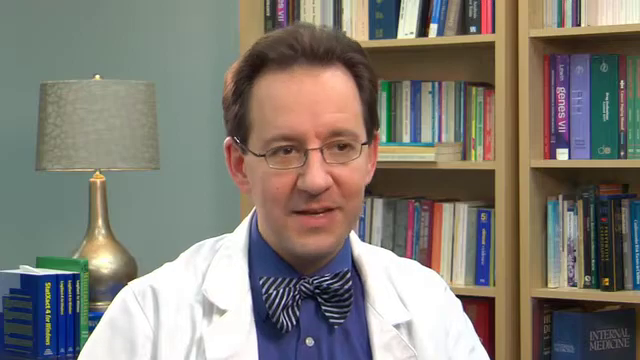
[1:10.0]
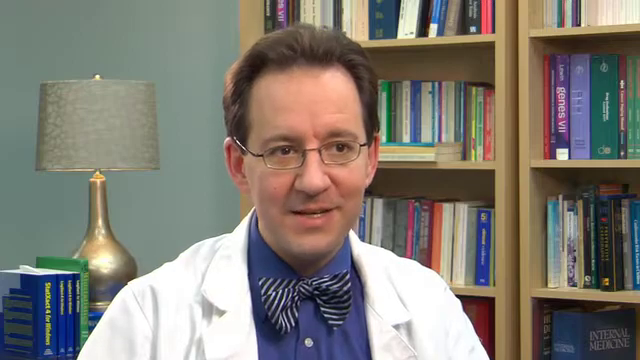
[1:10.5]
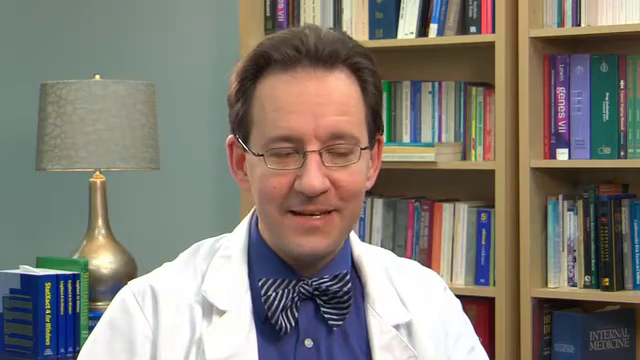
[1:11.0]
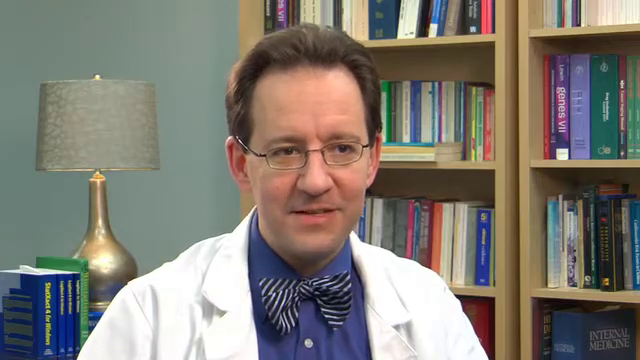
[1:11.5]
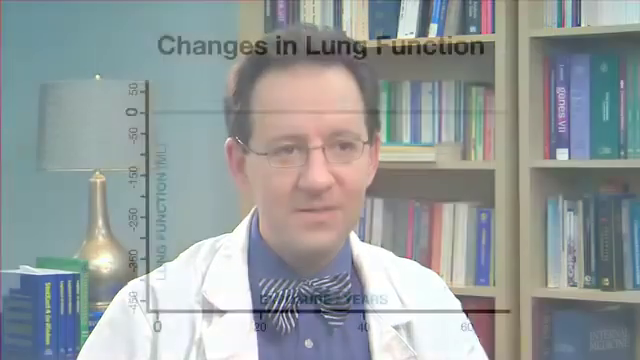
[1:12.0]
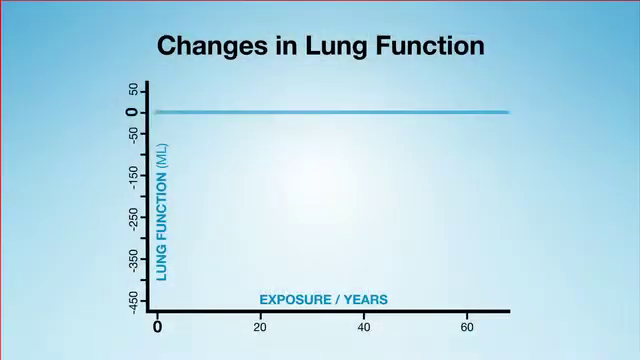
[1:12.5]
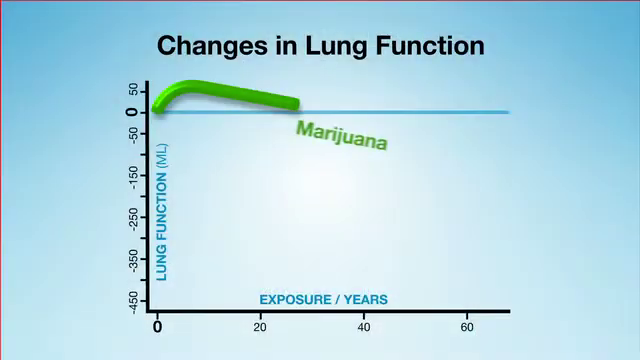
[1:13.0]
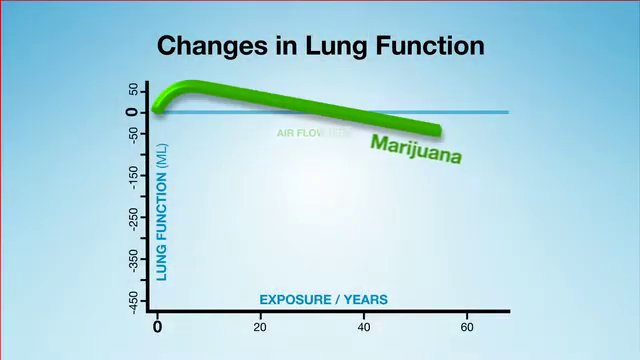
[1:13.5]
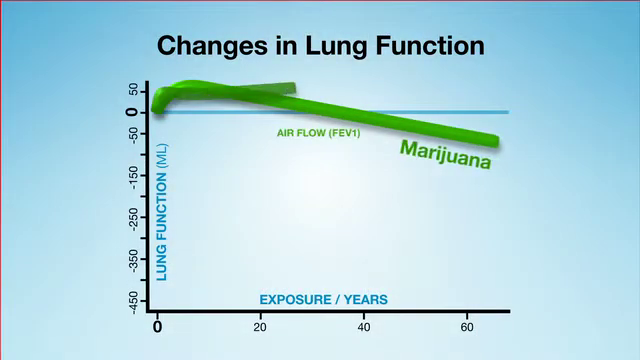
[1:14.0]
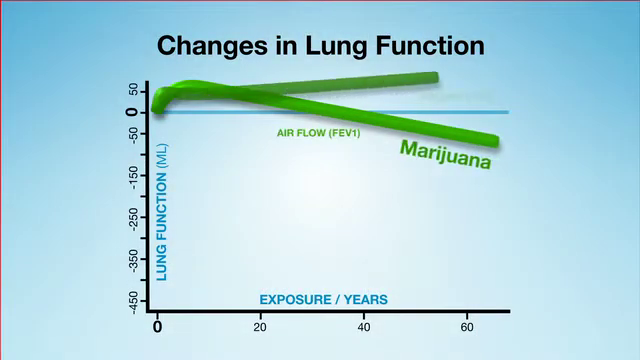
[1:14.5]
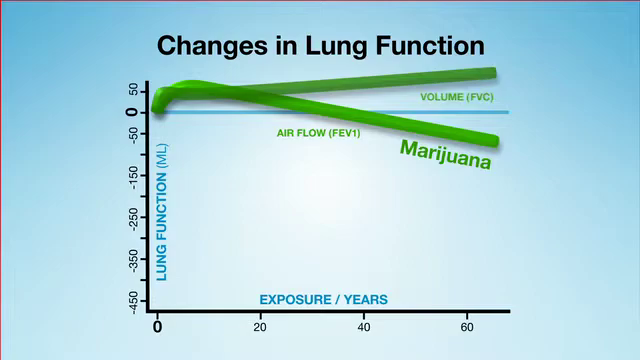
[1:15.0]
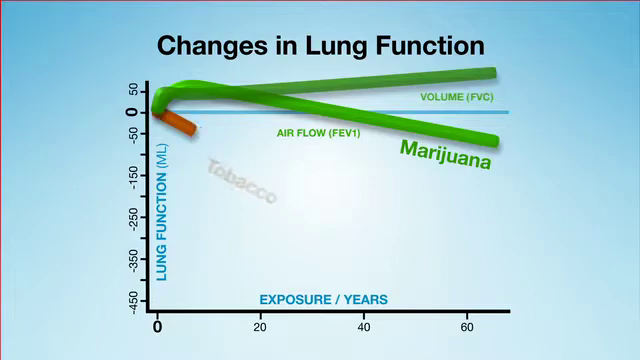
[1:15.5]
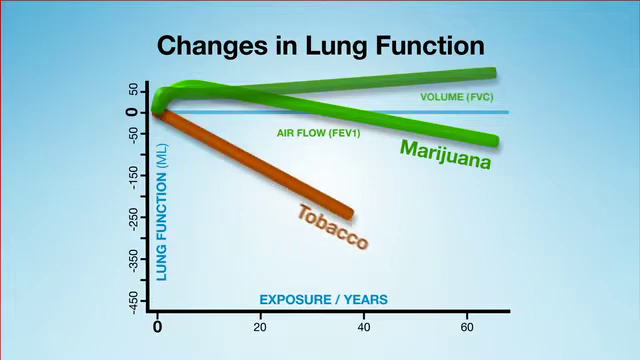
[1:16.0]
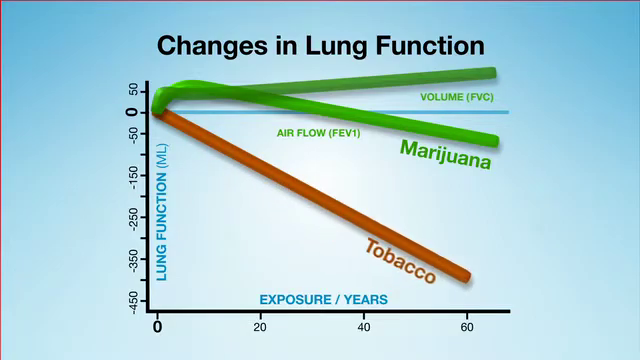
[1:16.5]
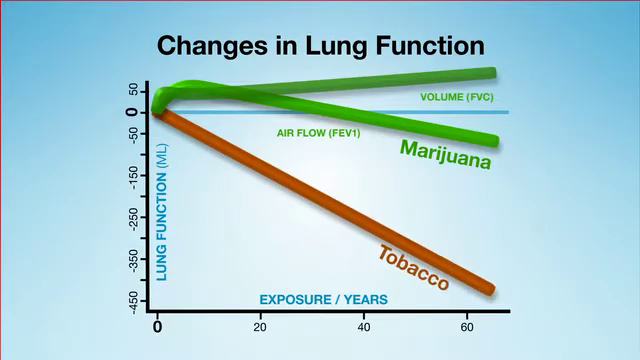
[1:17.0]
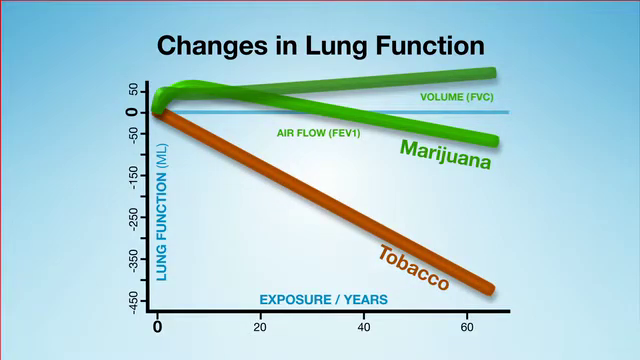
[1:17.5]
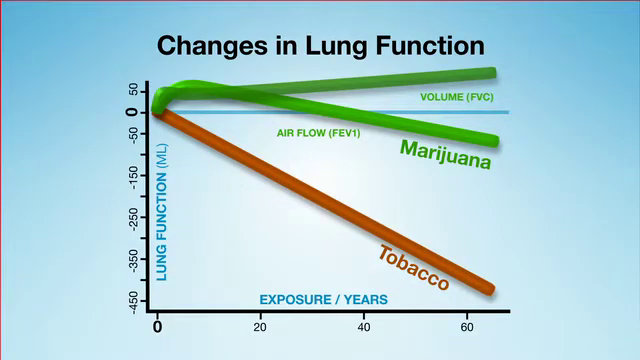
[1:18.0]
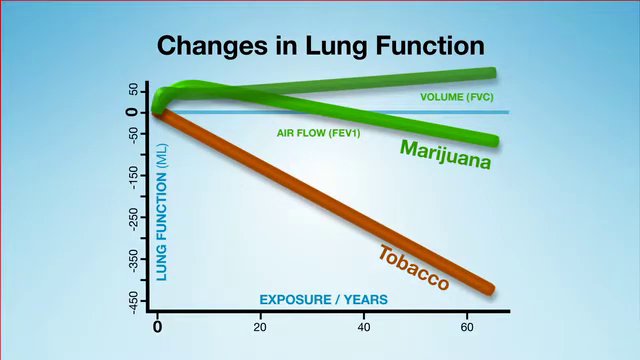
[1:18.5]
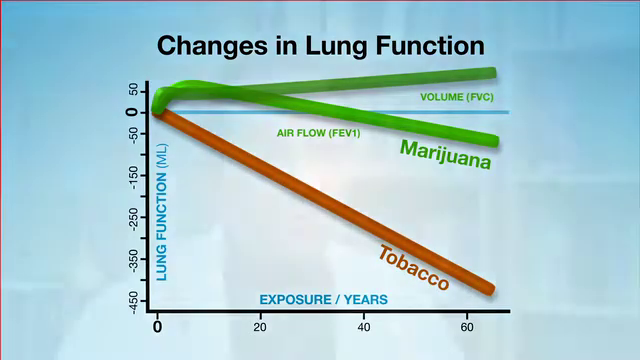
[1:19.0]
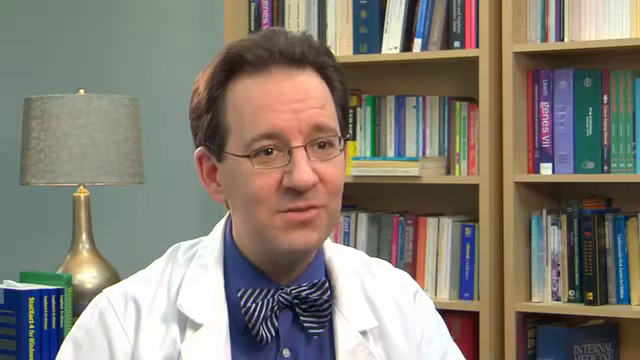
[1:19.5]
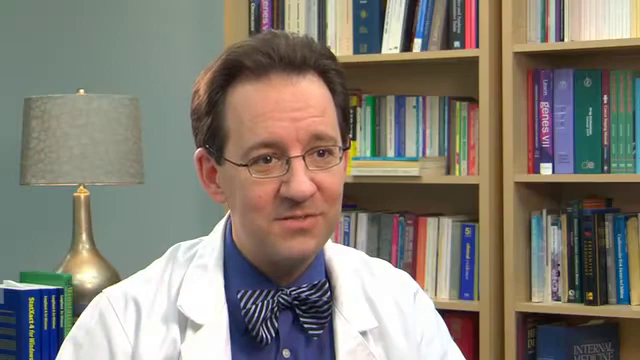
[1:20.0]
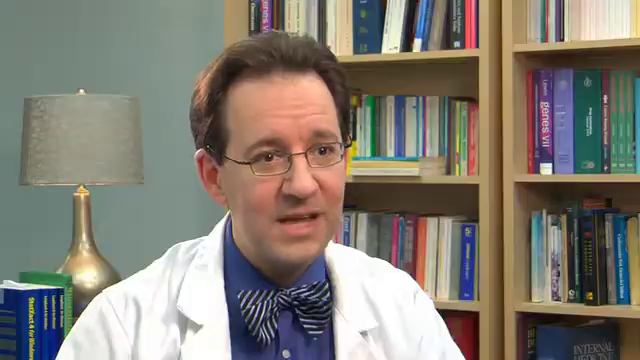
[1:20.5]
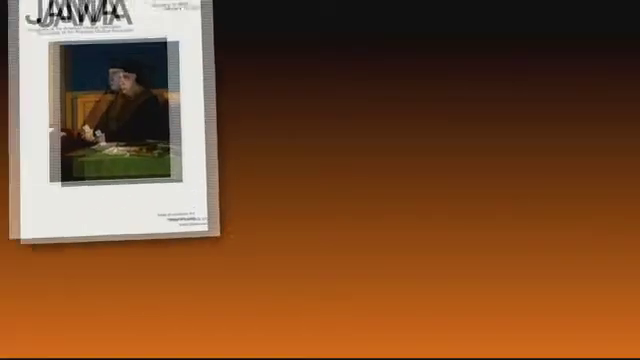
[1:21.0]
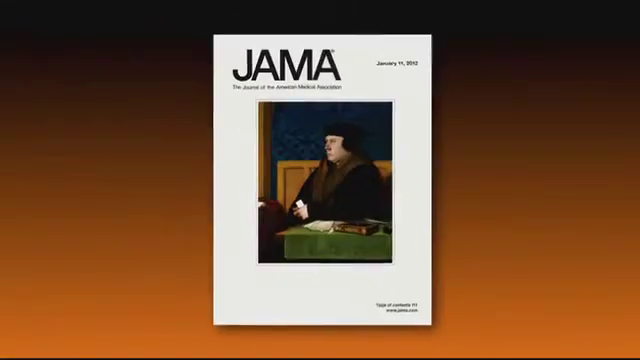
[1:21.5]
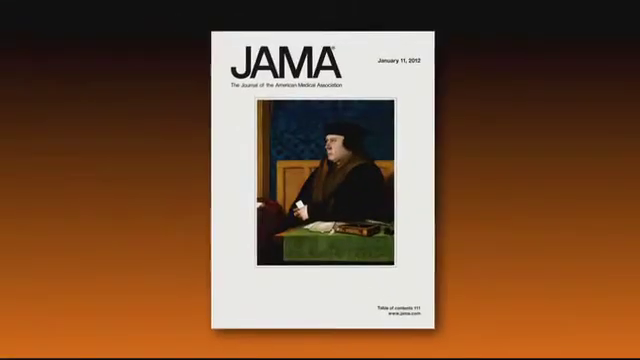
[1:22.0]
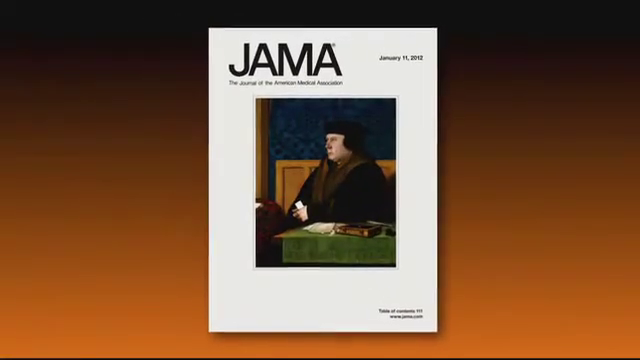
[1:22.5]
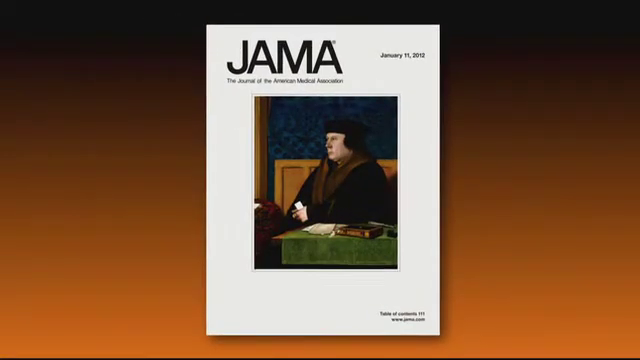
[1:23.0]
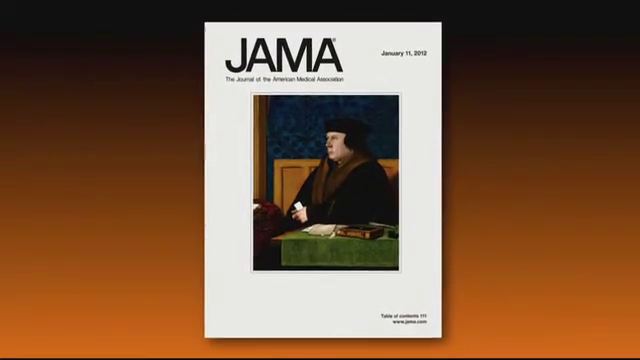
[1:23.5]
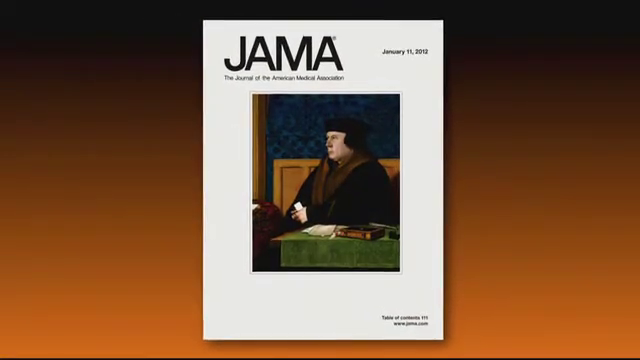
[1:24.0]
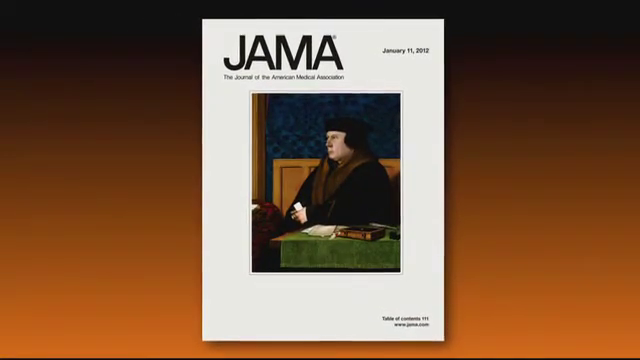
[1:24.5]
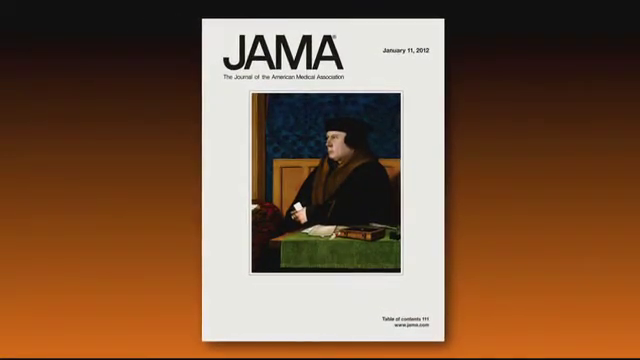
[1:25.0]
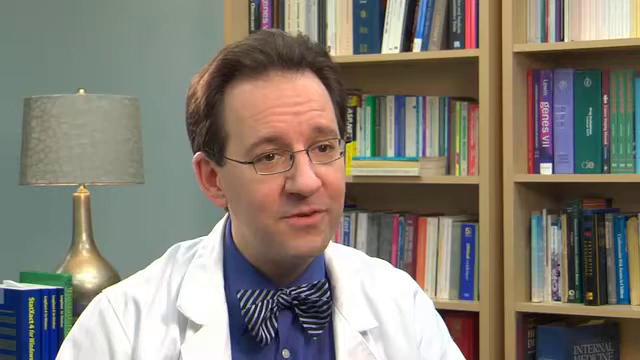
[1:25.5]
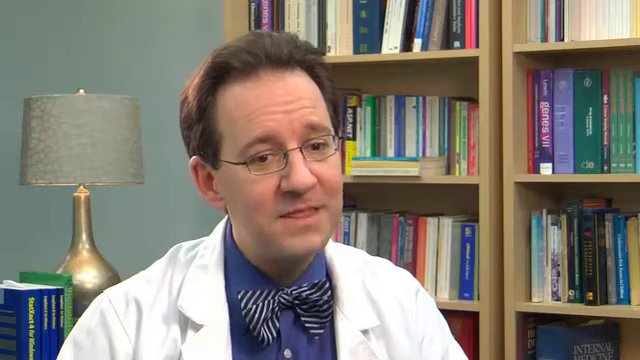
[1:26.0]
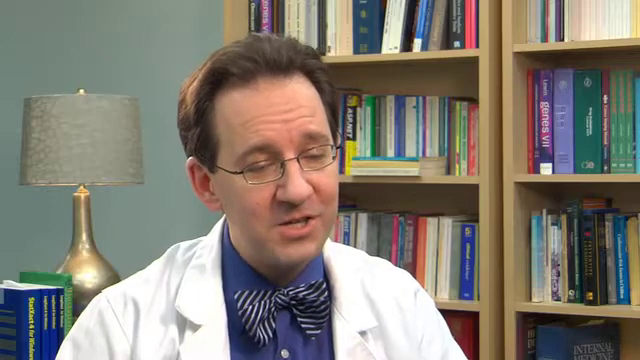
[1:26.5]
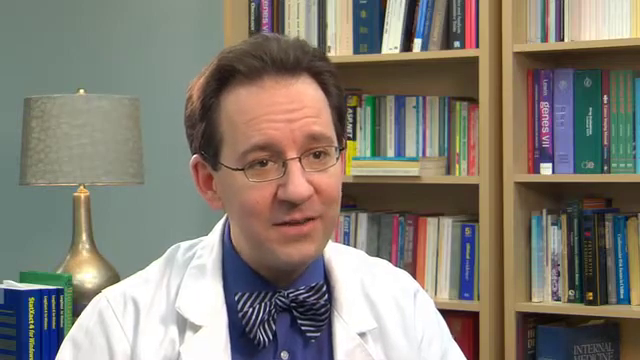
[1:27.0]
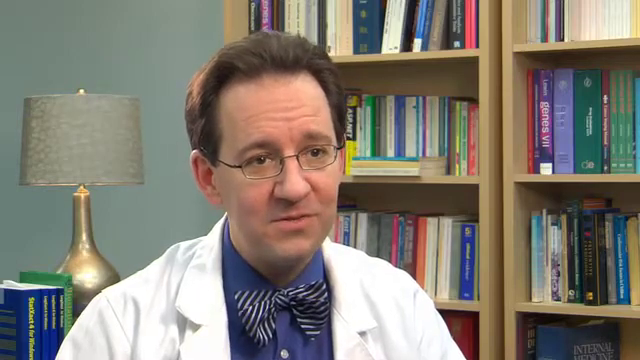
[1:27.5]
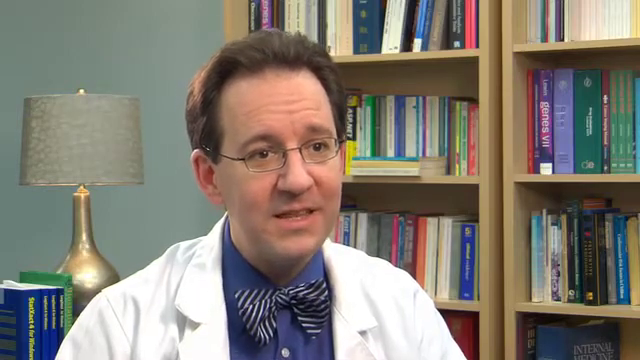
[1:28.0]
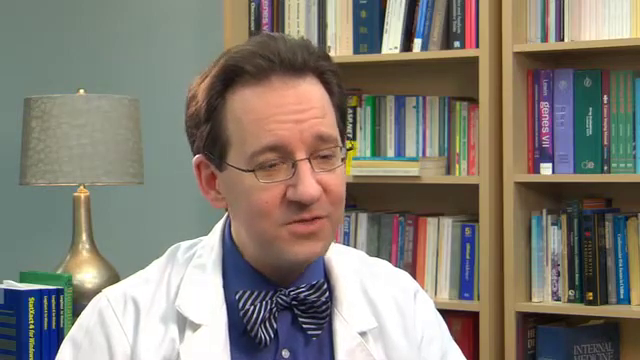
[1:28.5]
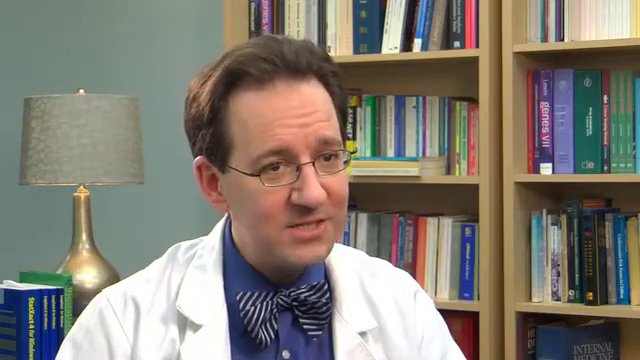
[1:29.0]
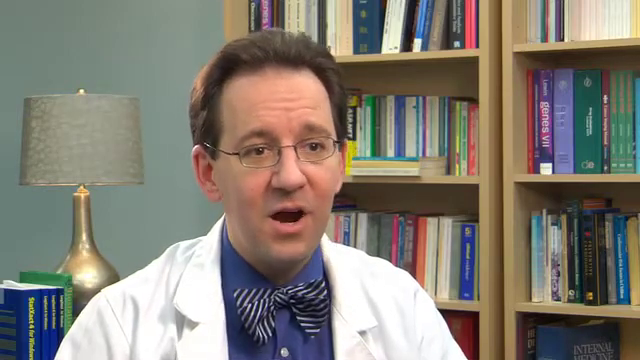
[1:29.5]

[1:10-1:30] The doctor sits in what appears to be his office, being interviewed by someone who cannot be seen. He has brown hair that is longer on top and tapered on the sides, bushy brown eyebrows and brown eyes. He wears silver wire-rimmed glasses, a long-sleeve blue collared button-down shirt and a blue and white striped bow tie. As he speaks, he raises his eyebrows; he is very expressive and is sort of smiling, with a little smirk on his face. To the right of him are two large bookshelves, each with at least four shelves. Behind him is a powder blue wall. There is a table lamp with a white shade and a pale gold base. Next to the lamp is a hardback book with a green cover, and next to this book are three soft-covered navy blue books with yellow writing down the spine.